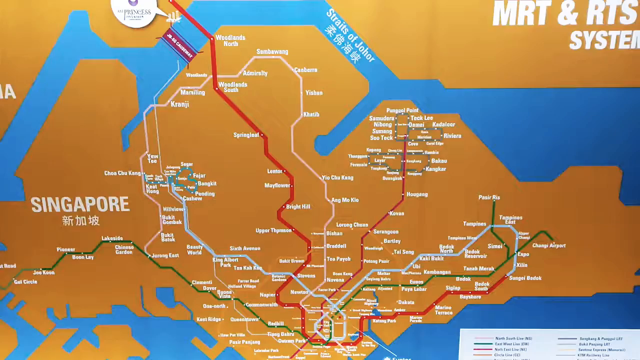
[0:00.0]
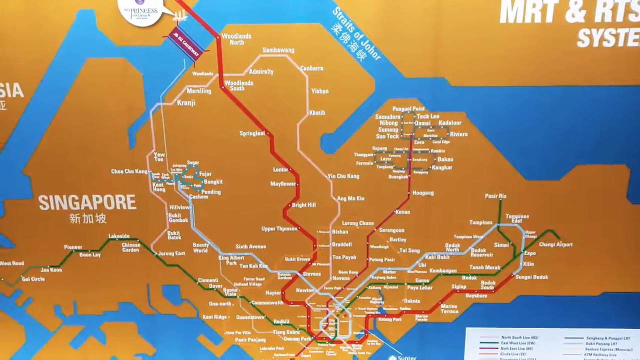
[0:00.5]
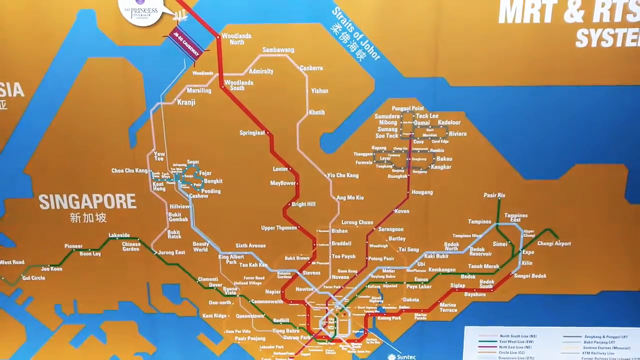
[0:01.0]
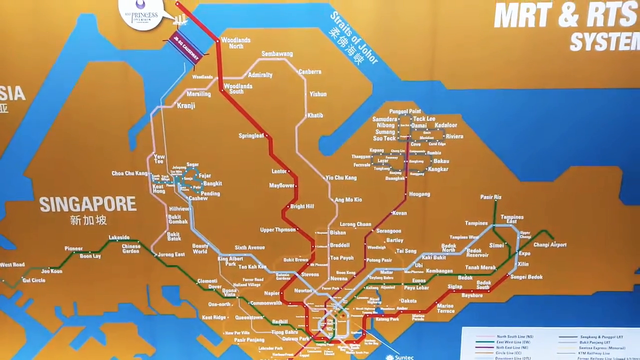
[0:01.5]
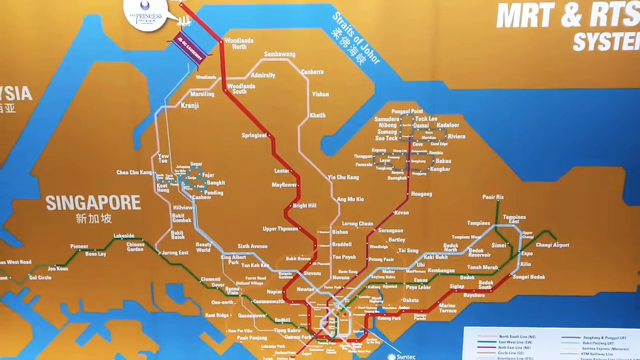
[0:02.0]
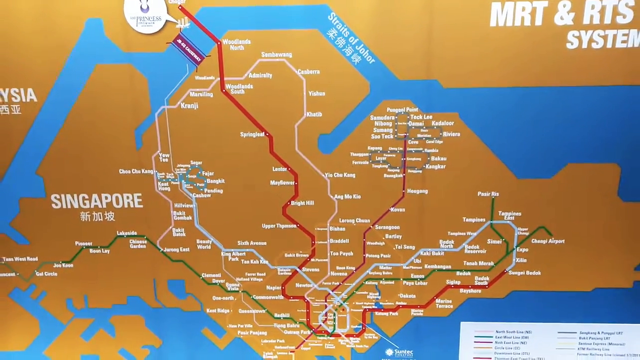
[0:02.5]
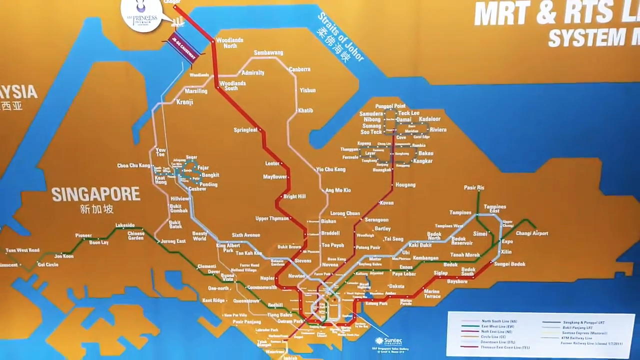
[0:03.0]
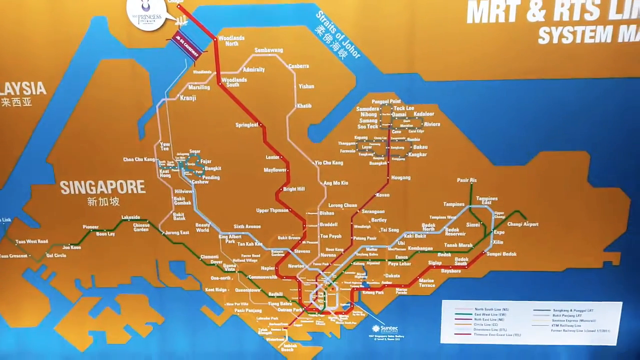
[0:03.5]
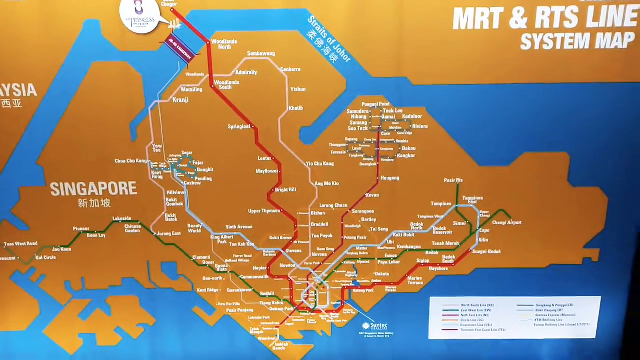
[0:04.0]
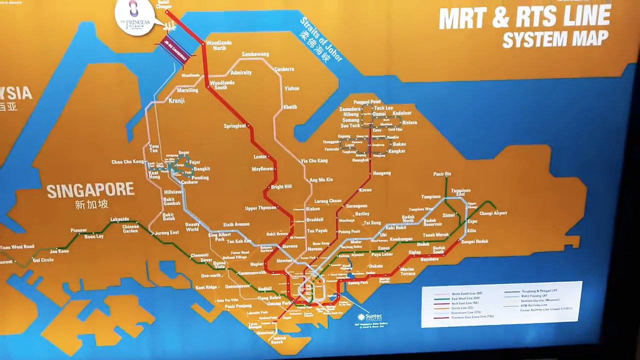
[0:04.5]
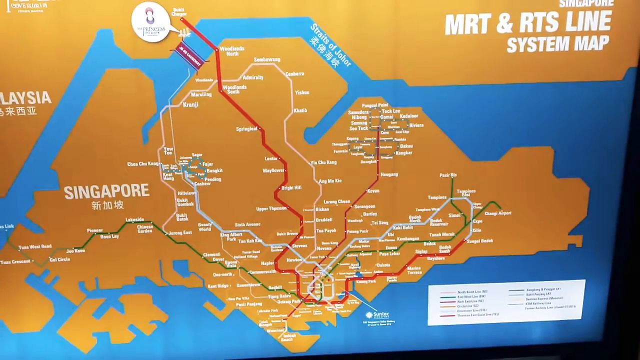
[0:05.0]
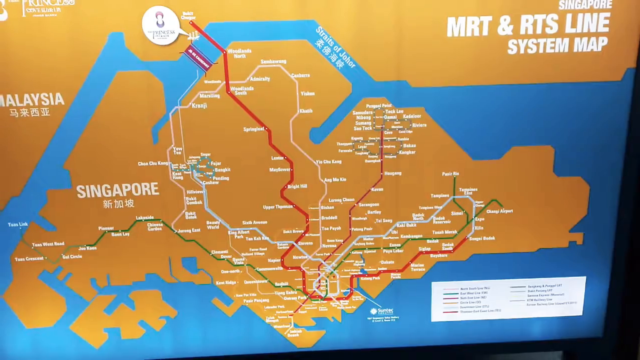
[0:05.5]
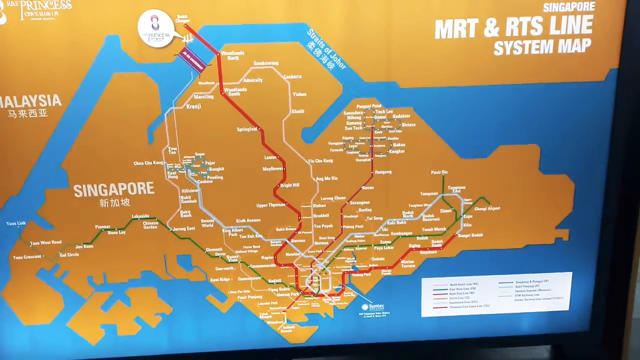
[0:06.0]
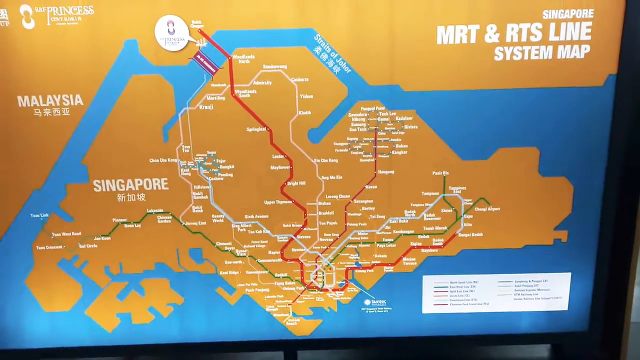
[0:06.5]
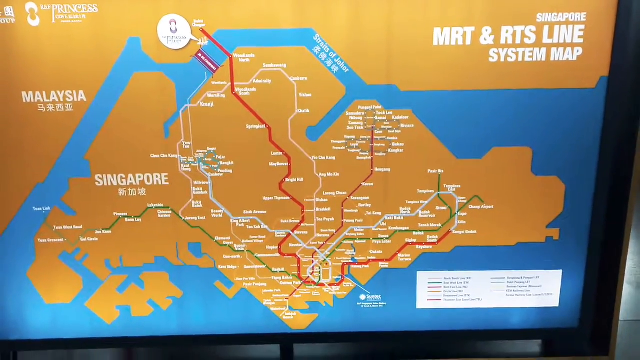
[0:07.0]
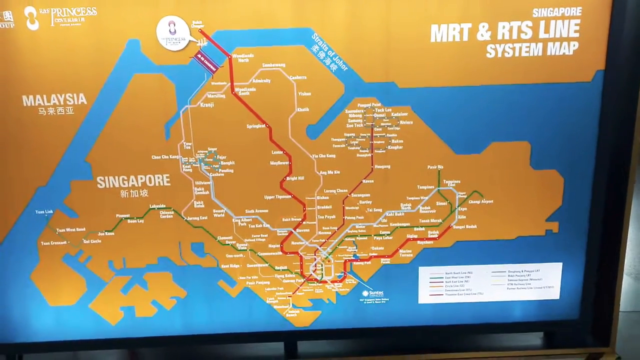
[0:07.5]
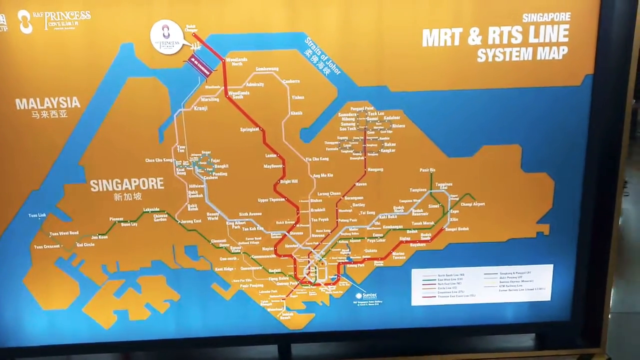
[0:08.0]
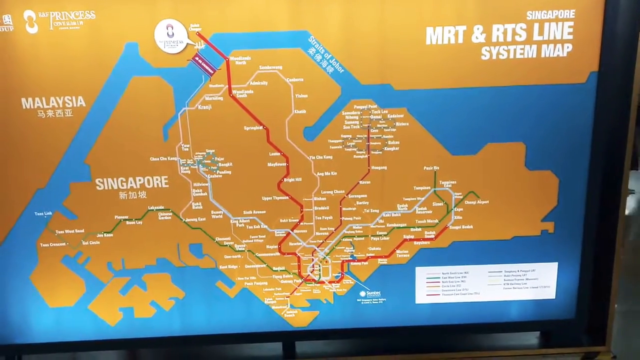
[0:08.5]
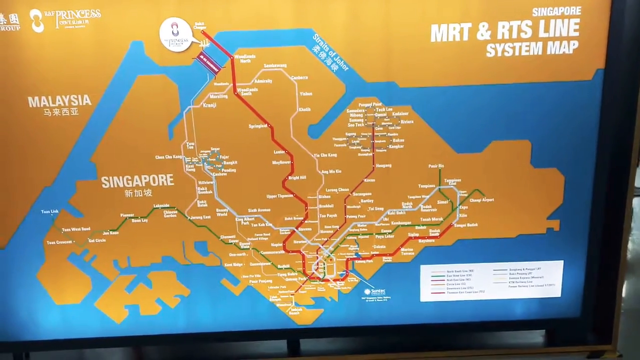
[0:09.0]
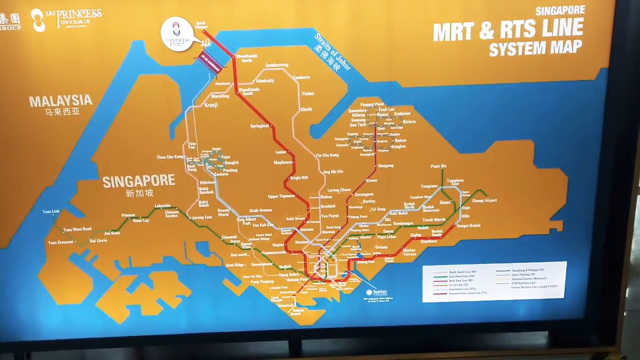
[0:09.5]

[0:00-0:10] A map of the Singapore transit lines, for either subways or buses, shows Singapore with an outline of the different transportation routes. The routes appear in red, green, and light blue, along with the names of their connections and stations. The map appears to be against a wall and is a flat brown cover, with blue for the waterways surrounding Singapore, and the transit lines each in their own color. The map appears to be labeled "MRT and RTS line system map." Malaysia is visible across the river or waterway of the Straits of Johor on the map.